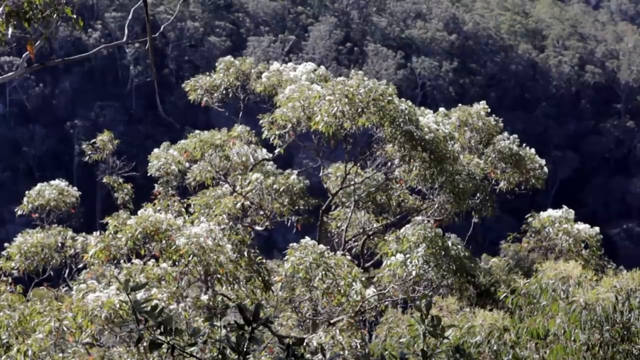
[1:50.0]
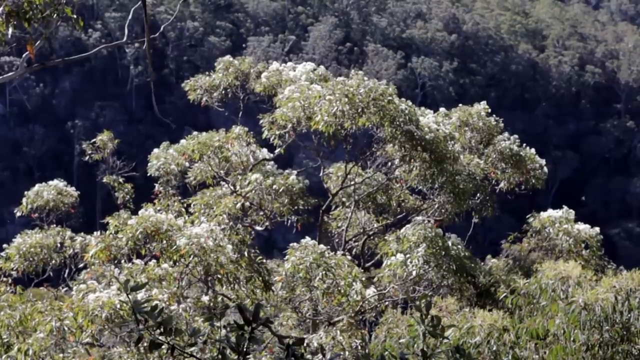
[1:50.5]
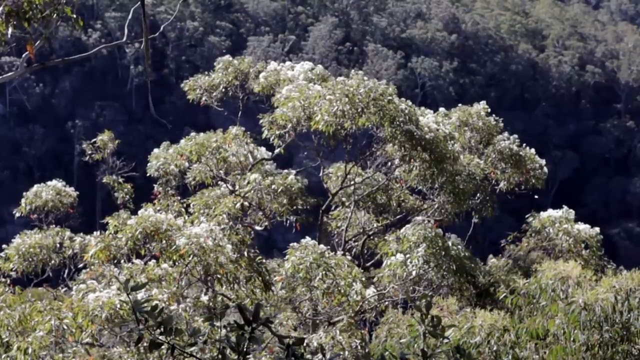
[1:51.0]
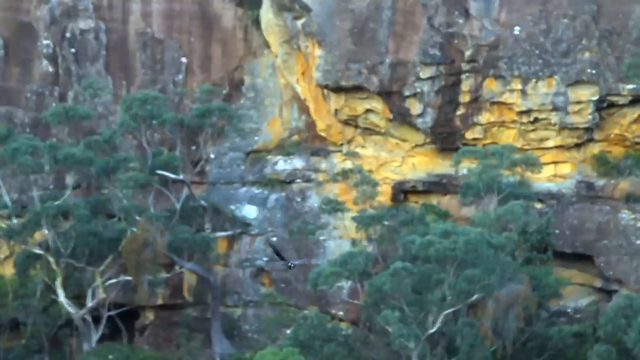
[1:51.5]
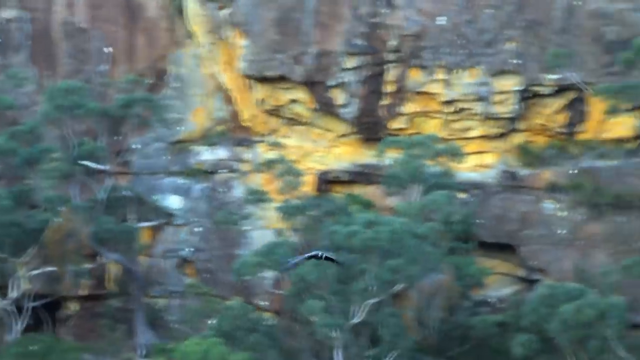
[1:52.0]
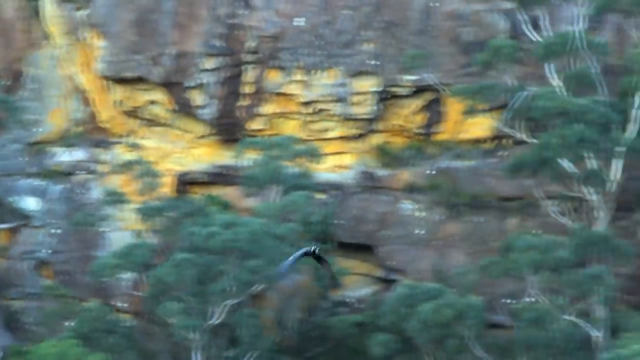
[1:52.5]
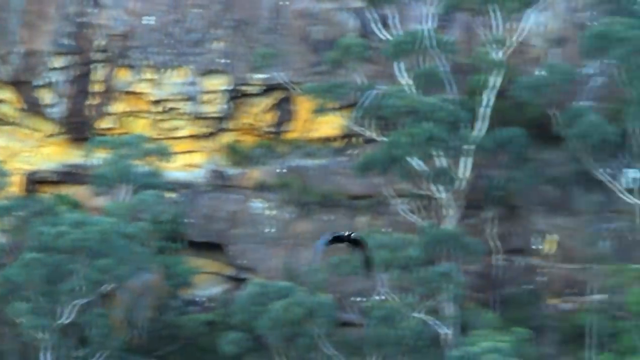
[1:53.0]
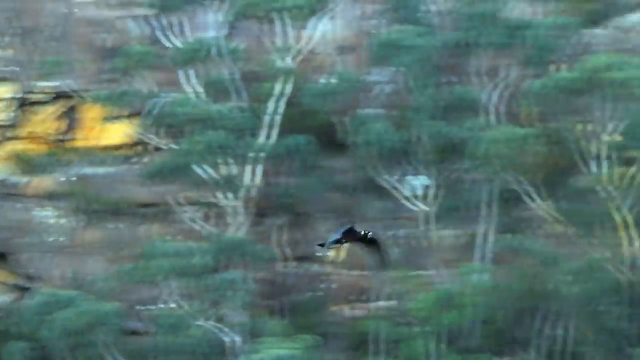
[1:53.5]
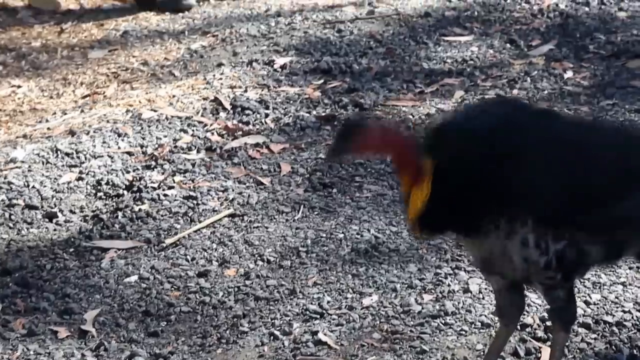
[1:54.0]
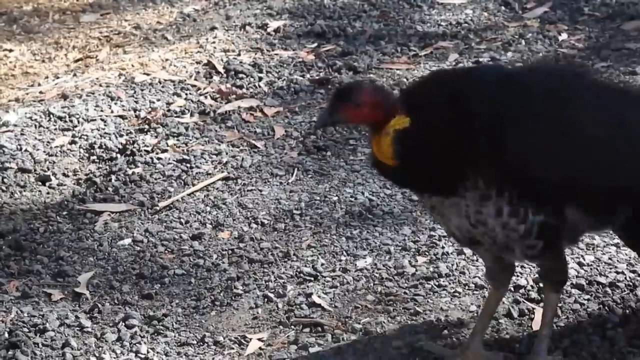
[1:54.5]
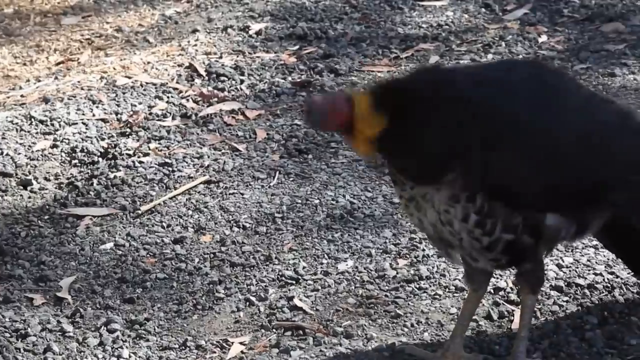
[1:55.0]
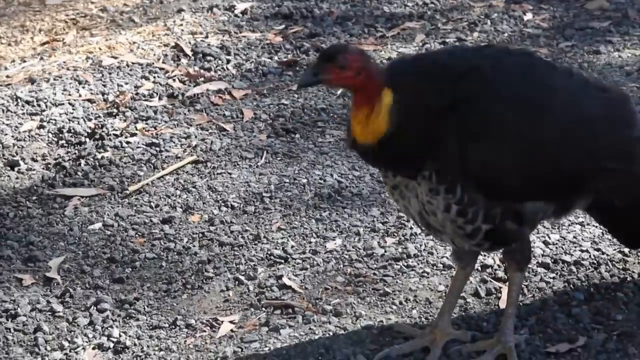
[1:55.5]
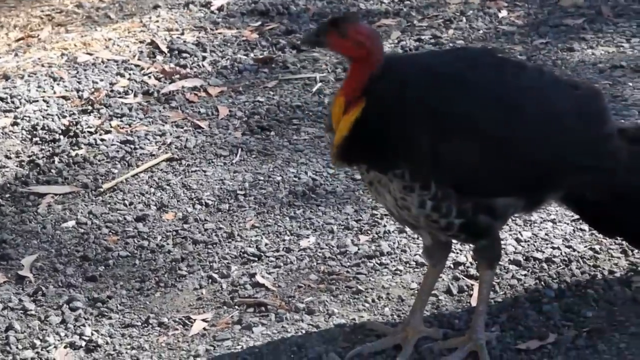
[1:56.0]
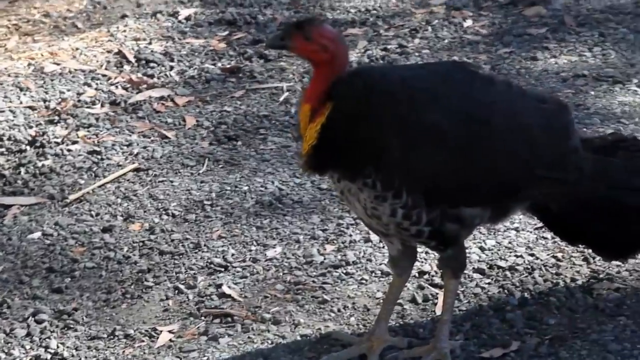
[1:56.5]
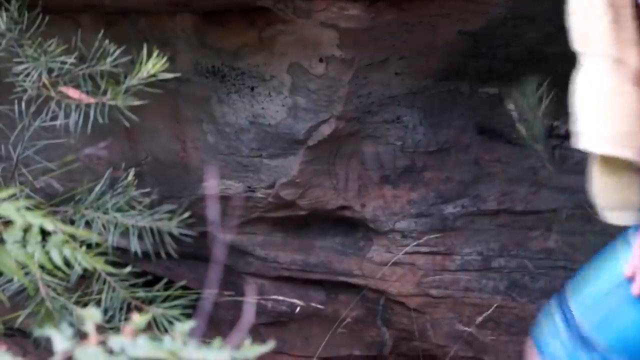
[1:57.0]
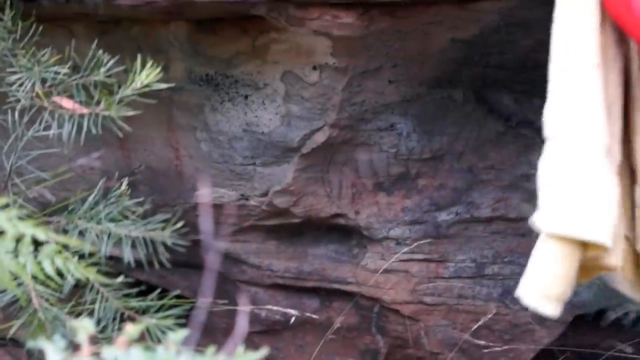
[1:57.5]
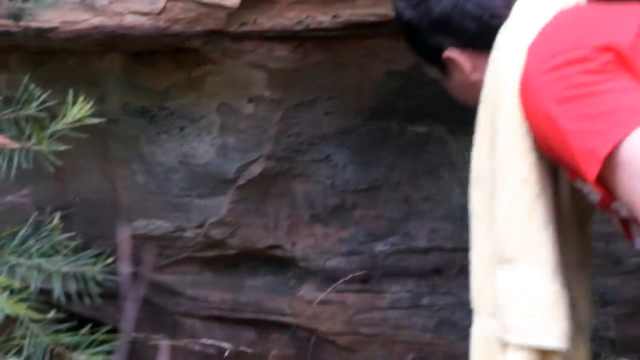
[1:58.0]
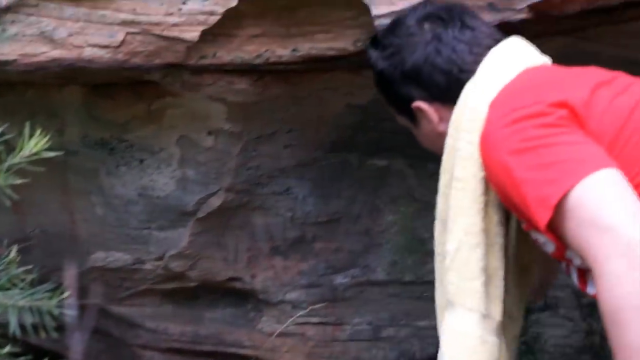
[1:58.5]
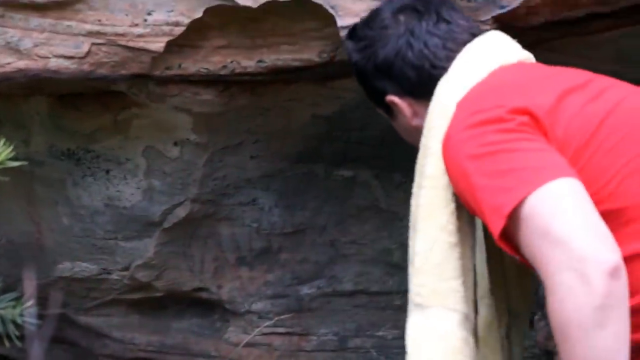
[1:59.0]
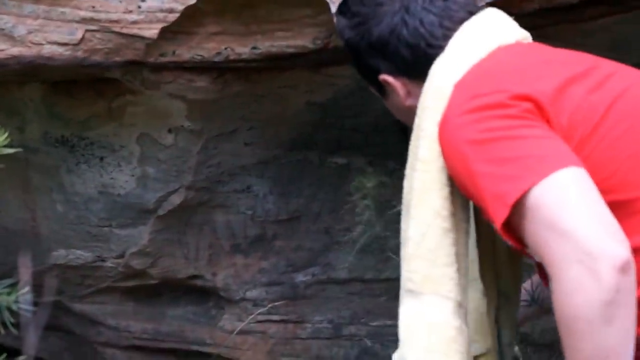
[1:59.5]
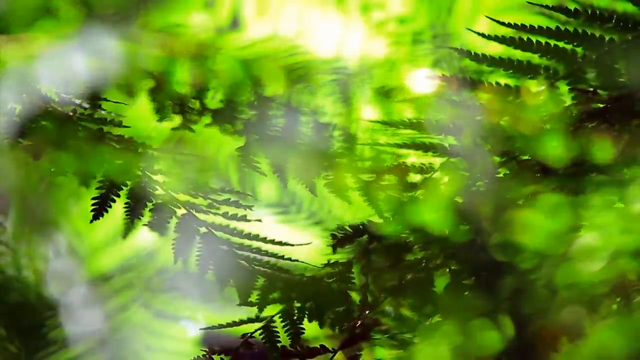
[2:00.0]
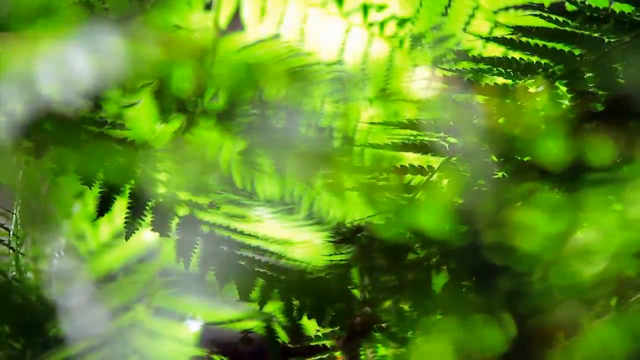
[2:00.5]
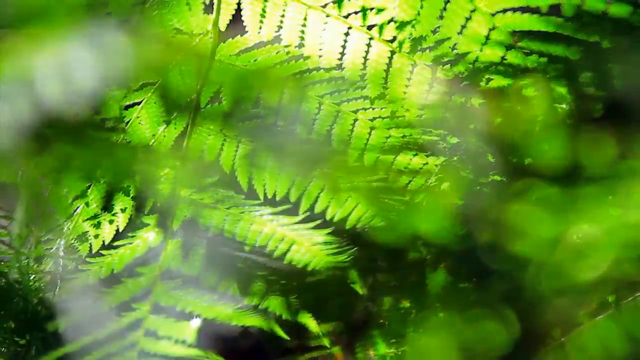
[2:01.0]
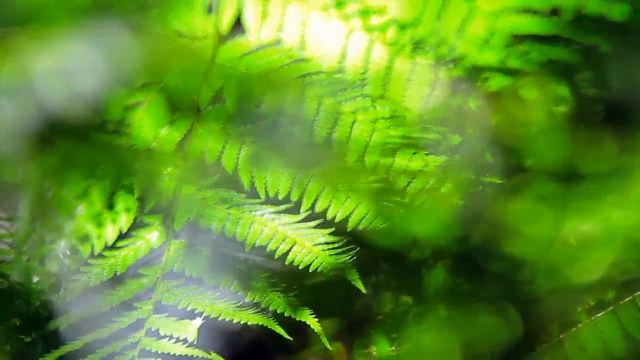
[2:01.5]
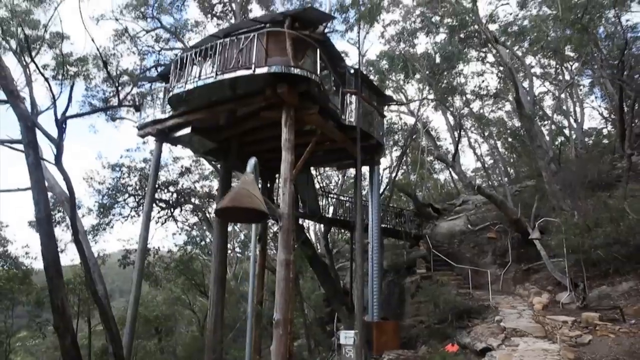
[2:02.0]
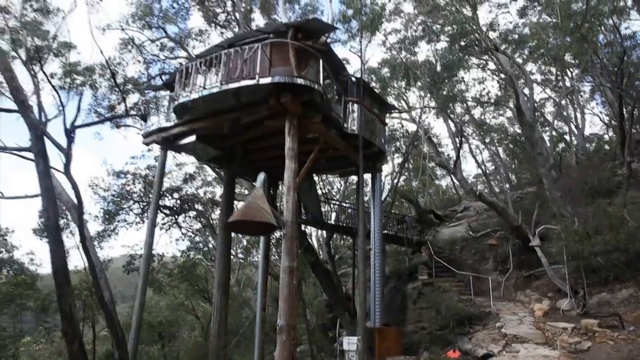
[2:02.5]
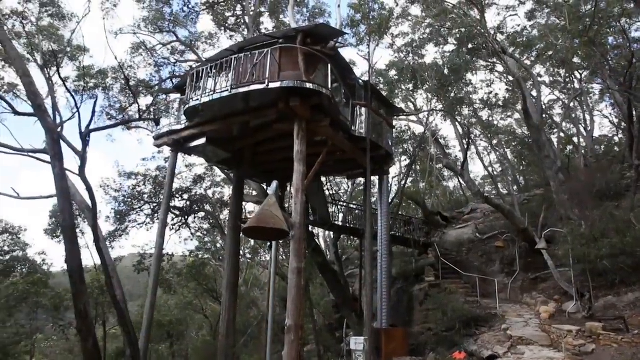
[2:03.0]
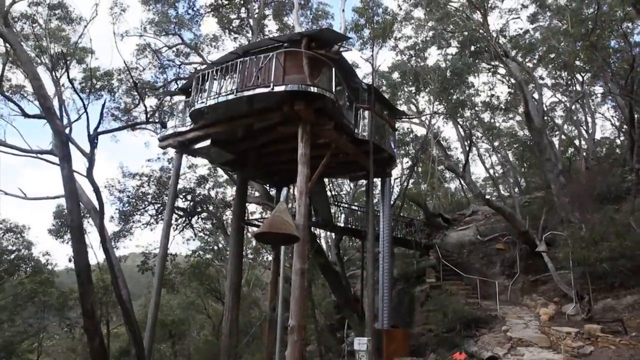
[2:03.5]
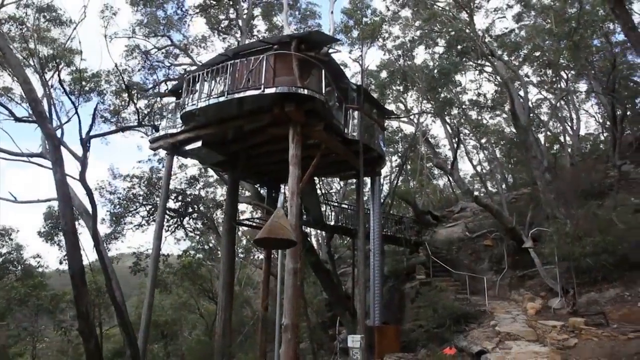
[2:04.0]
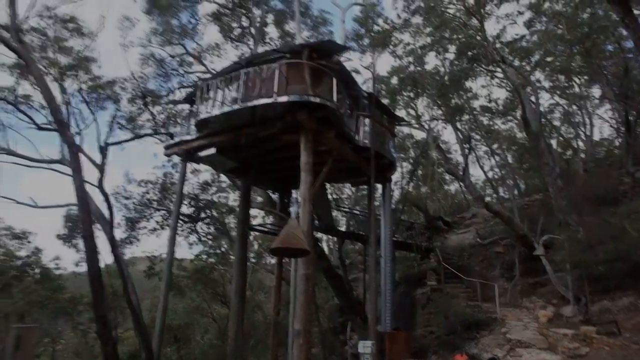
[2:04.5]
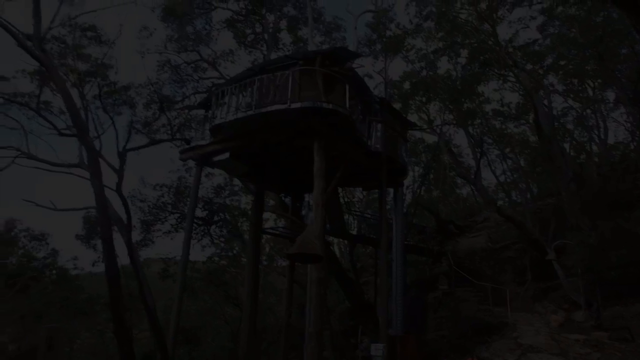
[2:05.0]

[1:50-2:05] Once again the tops of trees rustle in the wind. The video cuts to what looks like a bird flying by from left to right, then a close-up of what looks like possibly a turkey or some other bird with a red head; it shakes itself off and its head moves backward. A man wearing a red shirt with a towel around his neck appears to be poking leaves with a branch. Some leaves come into focus, and then an exterior shot of the treehouse appears once again. There is something like a lamppost in the ground at the bottom of the treehouse, poles come up to support the treehouse, and some horizontal beams also support it. The camera zooms out and pans away.